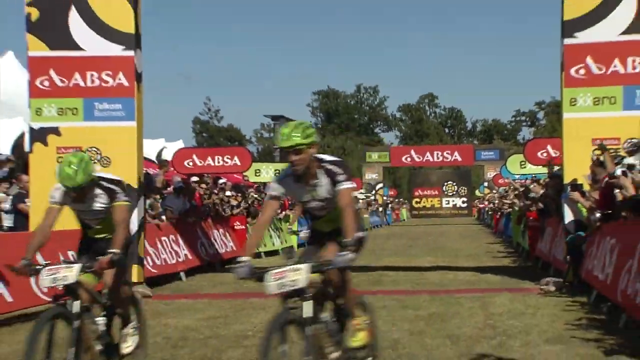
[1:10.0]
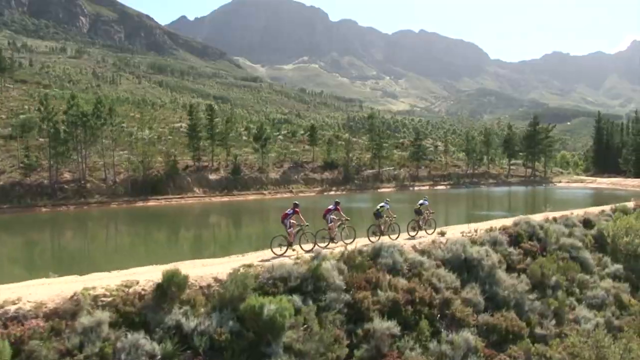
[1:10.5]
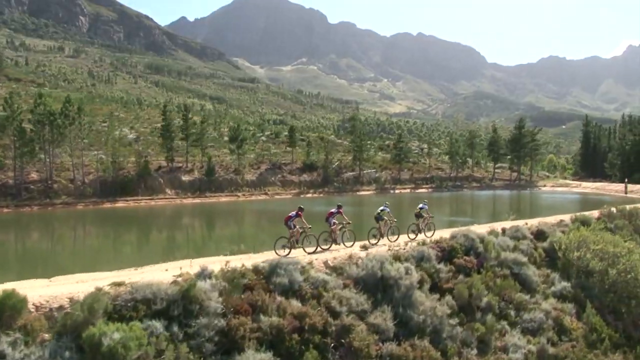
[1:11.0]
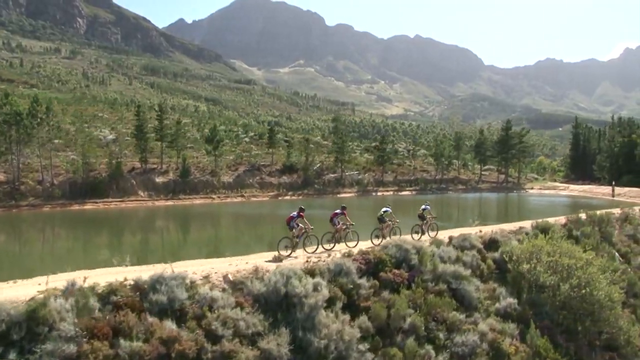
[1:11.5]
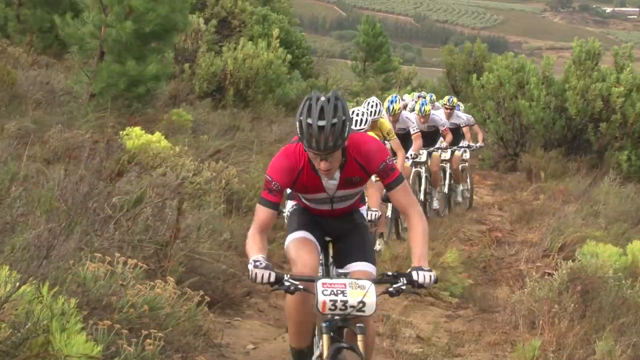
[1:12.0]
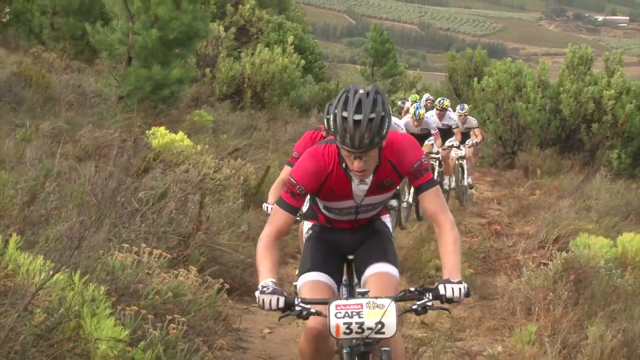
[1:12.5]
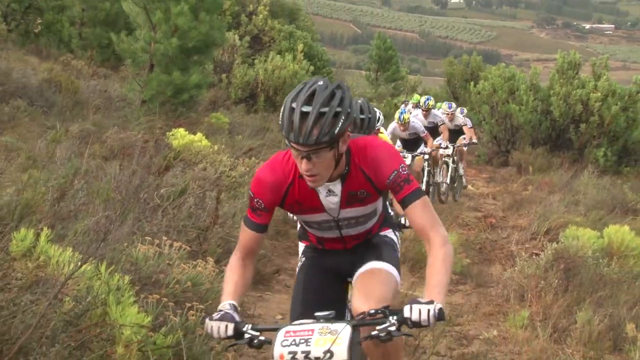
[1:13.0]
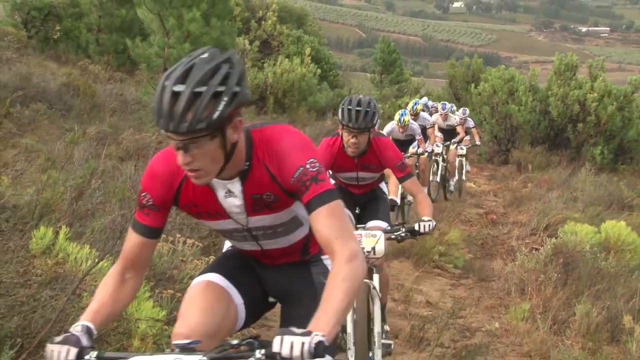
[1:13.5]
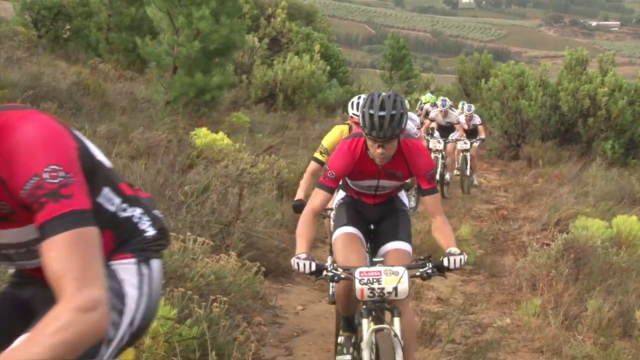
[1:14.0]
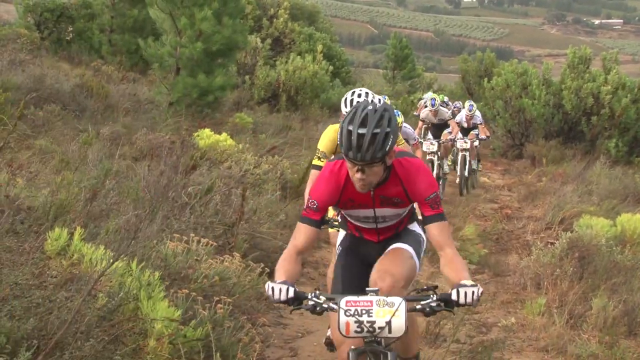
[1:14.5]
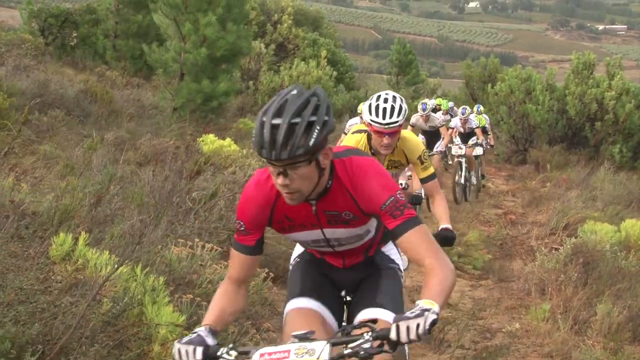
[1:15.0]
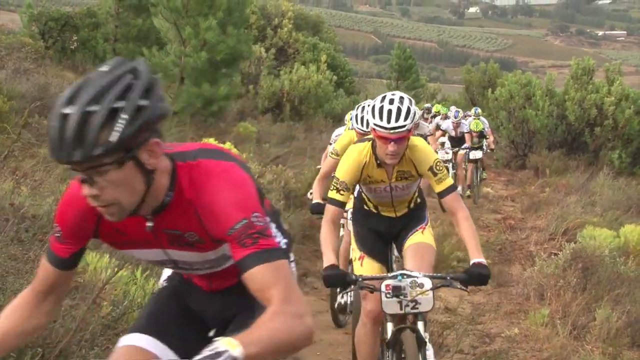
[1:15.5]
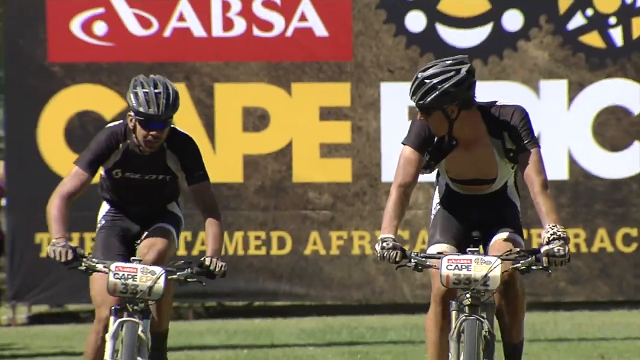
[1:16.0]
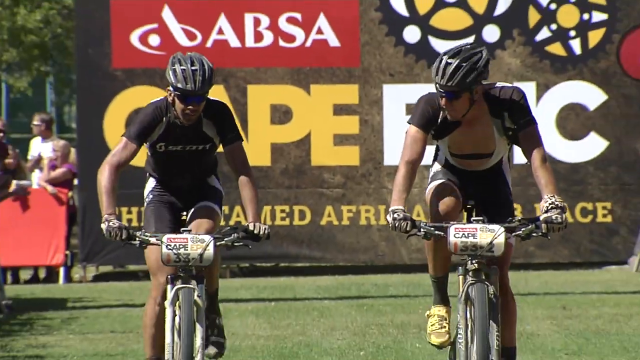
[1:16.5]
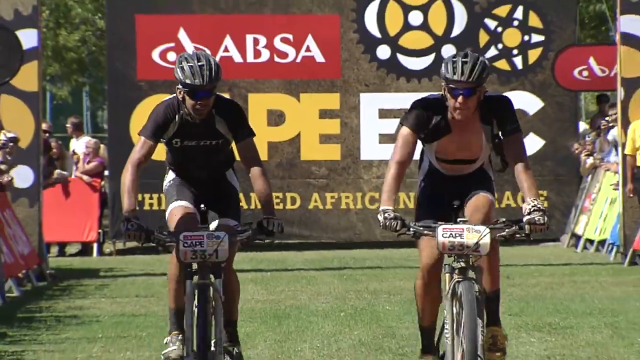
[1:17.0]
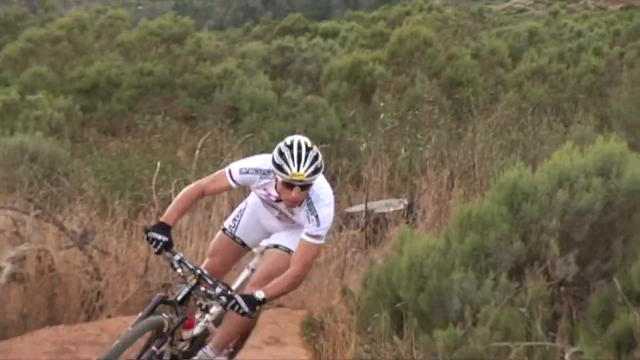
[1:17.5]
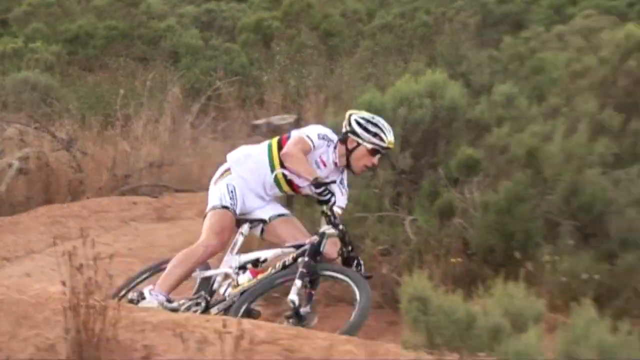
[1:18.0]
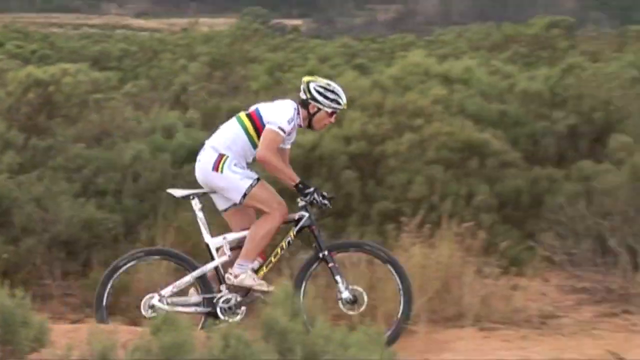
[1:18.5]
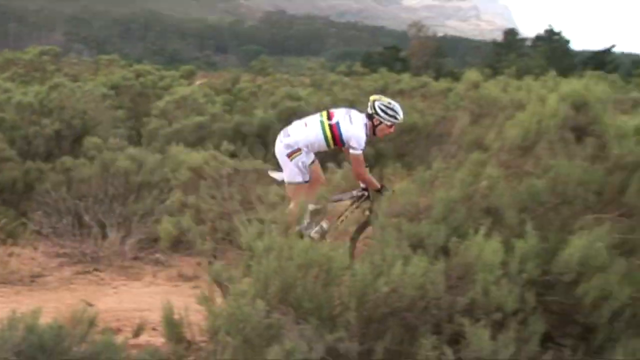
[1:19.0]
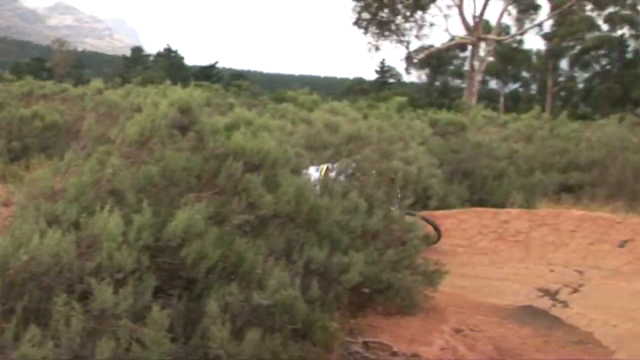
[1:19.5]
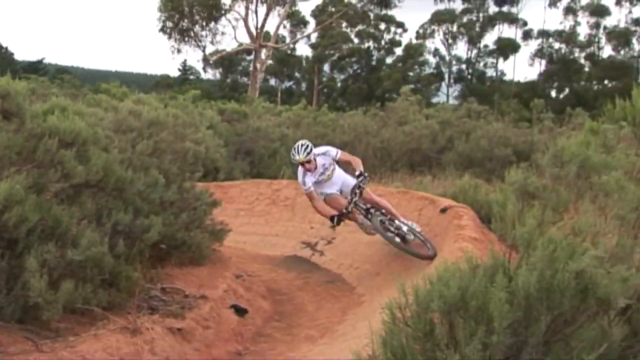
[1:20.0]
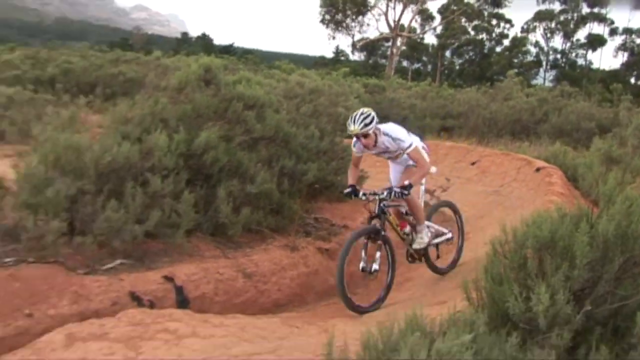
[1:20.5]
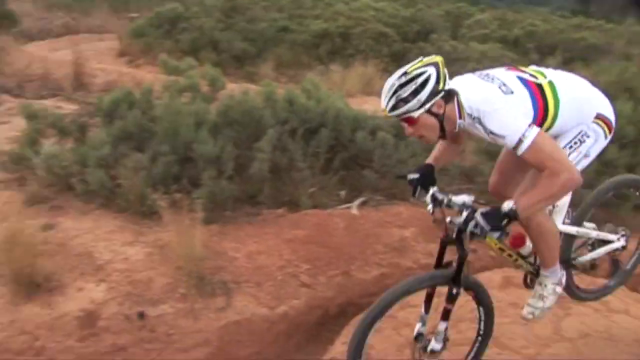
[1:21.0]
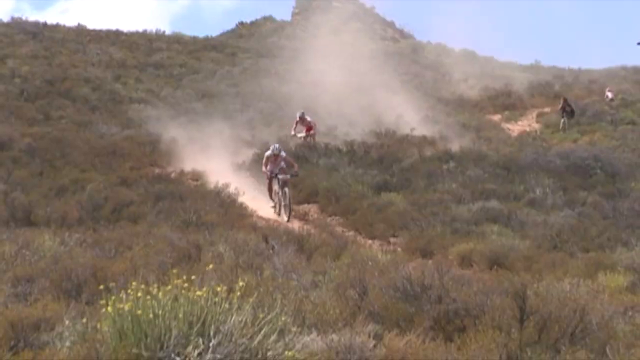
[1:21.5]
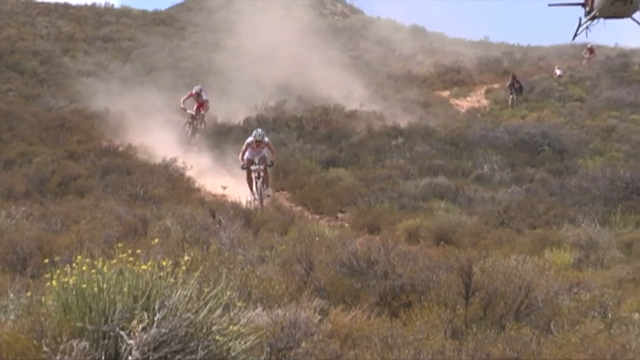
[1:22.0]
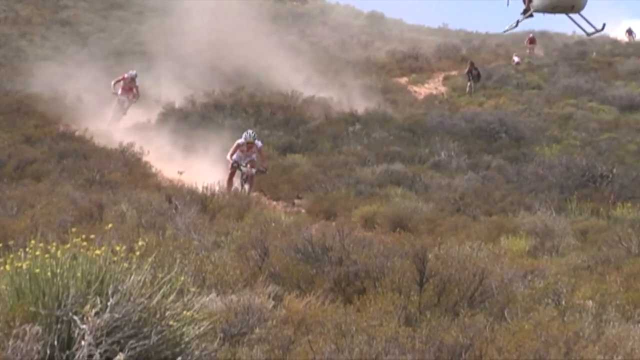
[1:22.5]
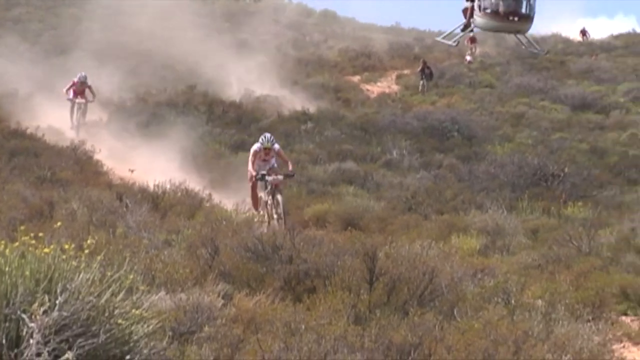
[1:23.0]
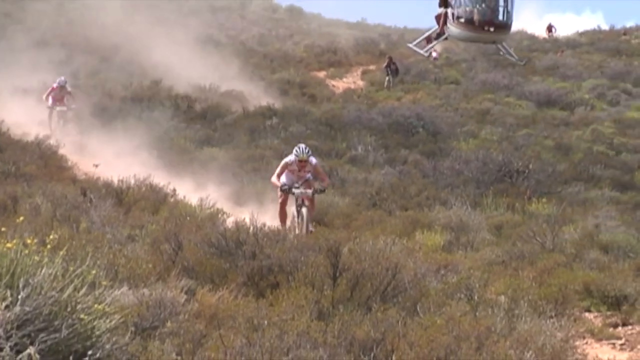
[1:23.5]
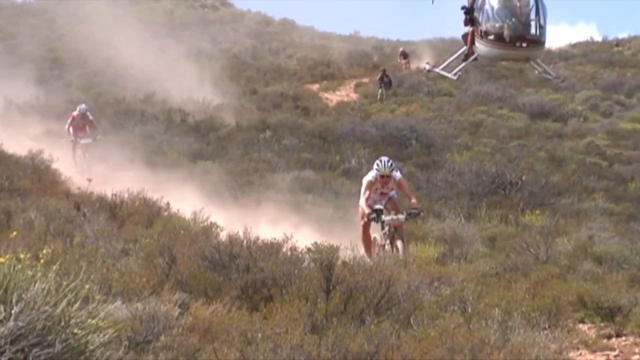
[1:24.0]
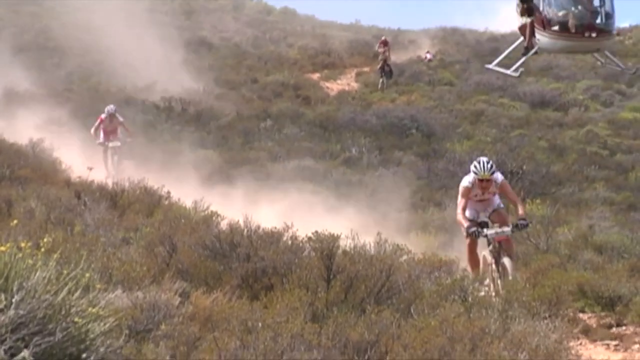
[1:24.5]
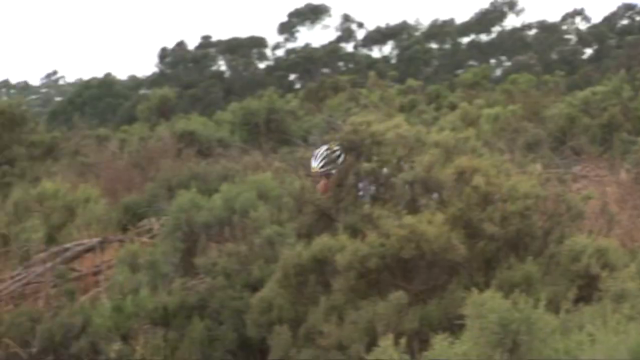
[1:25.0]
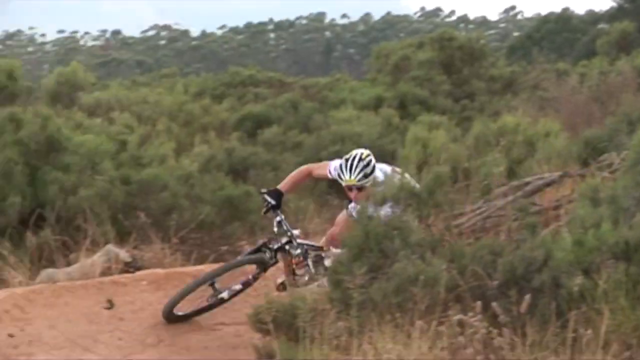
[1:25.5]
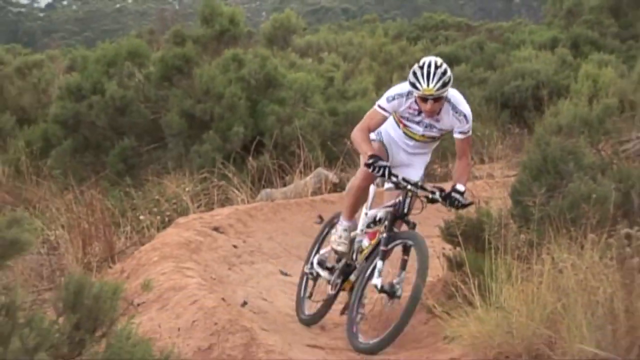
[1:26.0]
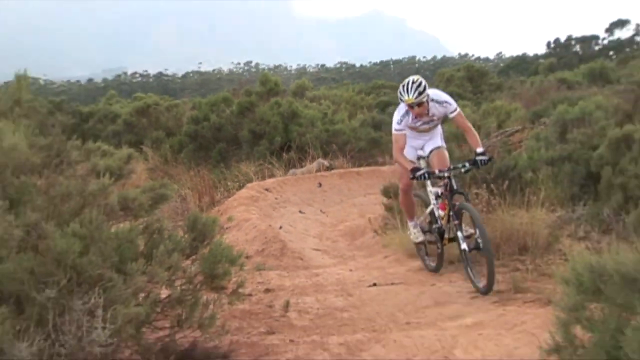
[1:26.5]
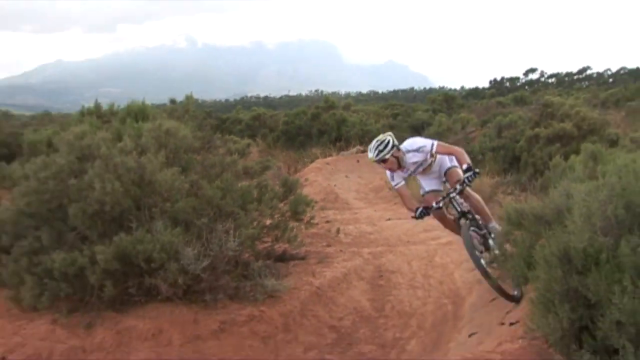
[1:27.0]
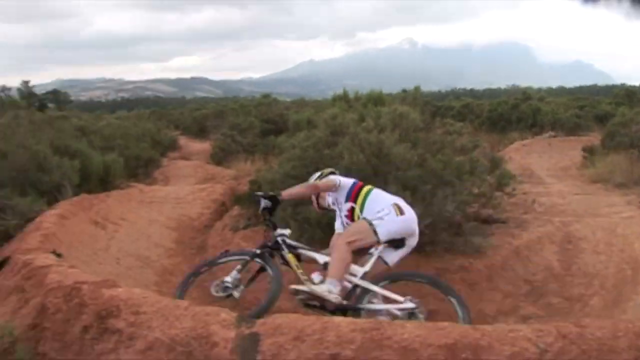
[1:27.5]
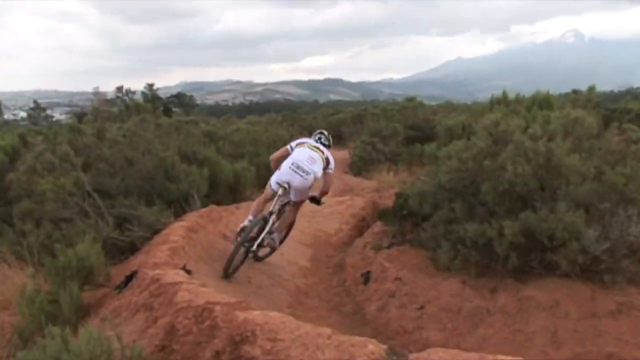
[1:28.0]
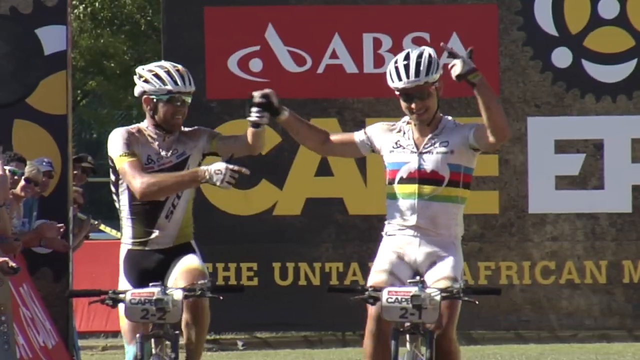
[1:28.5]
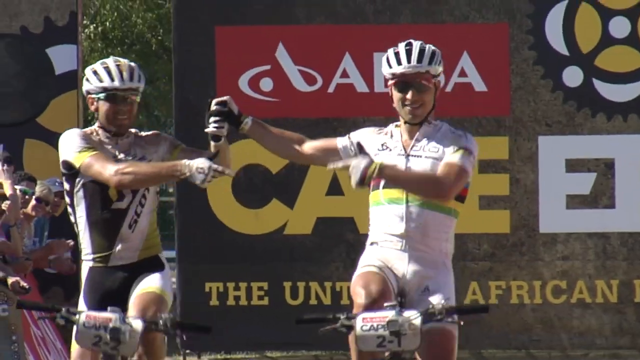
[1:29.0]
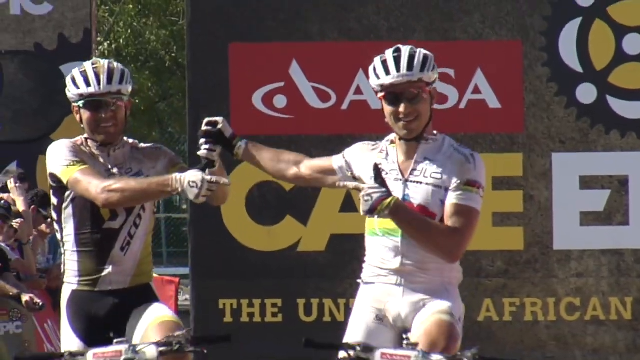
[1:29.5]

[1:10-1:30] In a bicycle race, two cyclists are on the left side of the screen toward the center, both wearing green-looking hats or helmets and white tops with black trim on the shoulders. Right behind them, a red finish line crosses the dirt trail. Spectators stand behind barriers on both sides of the trail, watching the race at the finish line. In the far background, just right of center, a sign reads "Cape Epic". Tall trees with green leaves are in the farthest background, and the sky looks mostly clear. The scene changes to what appears to be the side of a pond, with a dirt trail running alongside it. Four cyclists ride along the trail toward the right of the screen, with a lot of bushes on the right side of the trail and the pond on the left. Fairly tall mountains and hills rise in the background, with lots of green at their base.